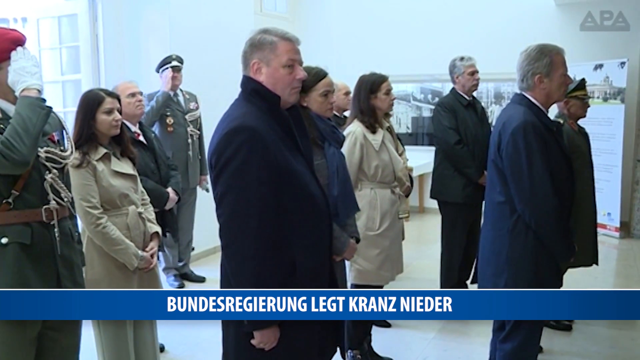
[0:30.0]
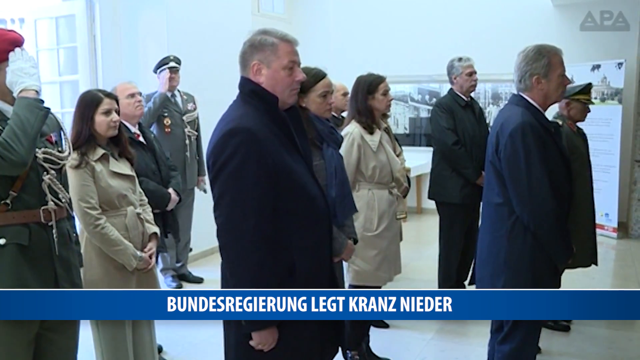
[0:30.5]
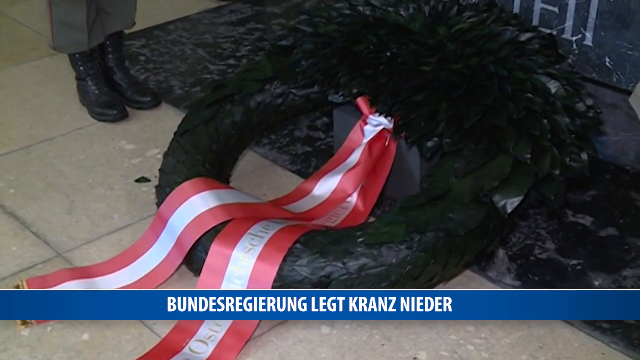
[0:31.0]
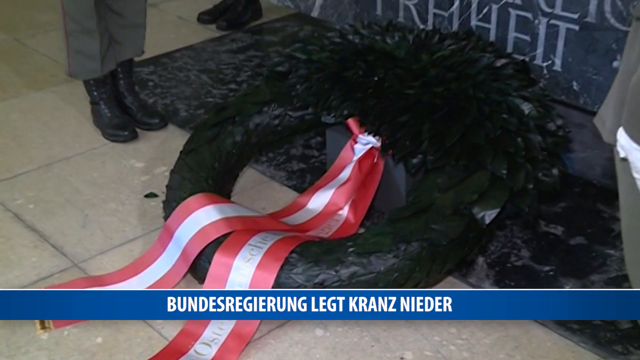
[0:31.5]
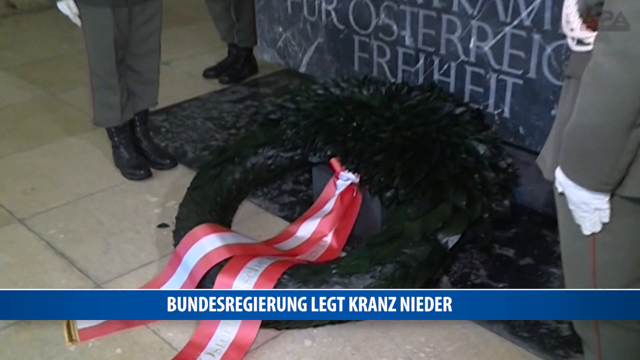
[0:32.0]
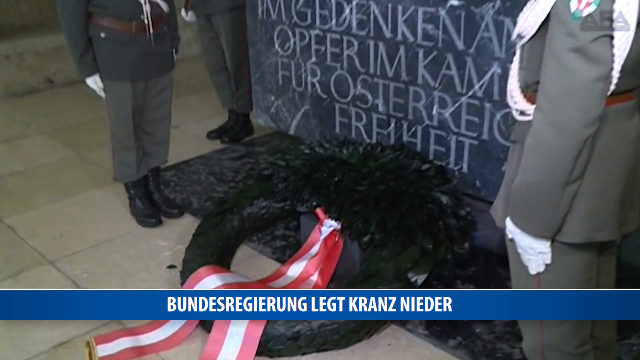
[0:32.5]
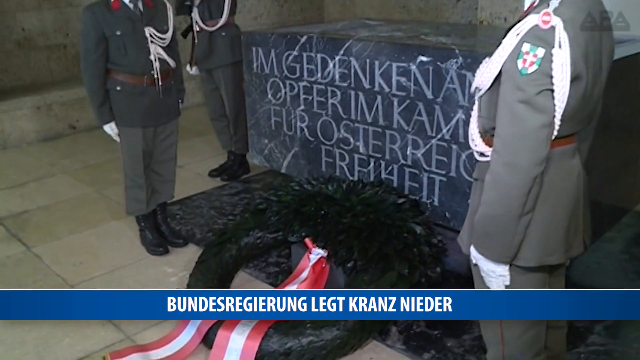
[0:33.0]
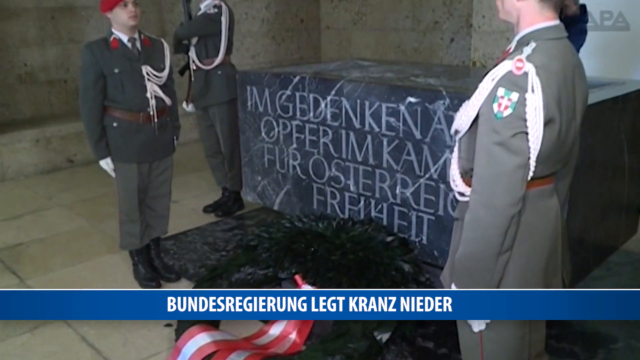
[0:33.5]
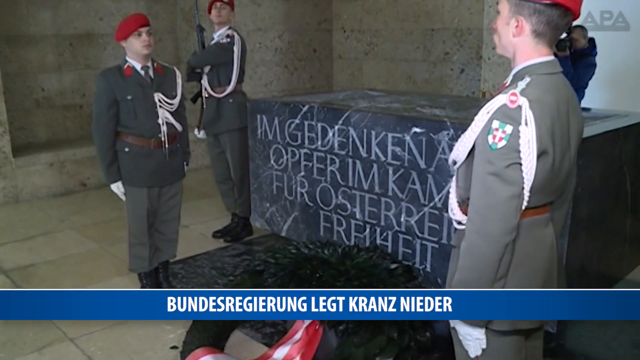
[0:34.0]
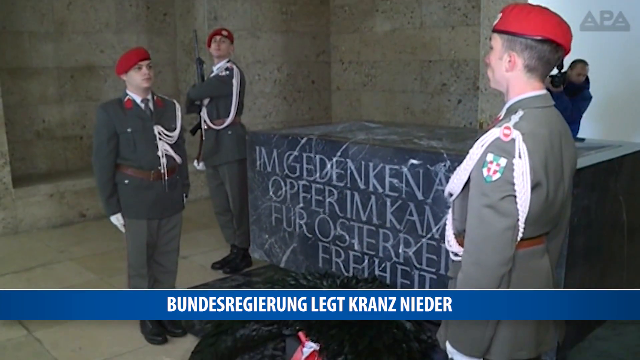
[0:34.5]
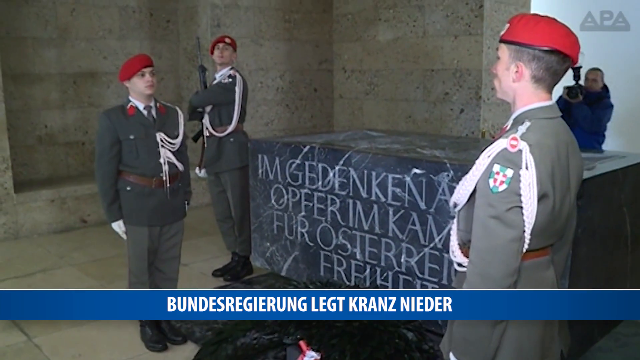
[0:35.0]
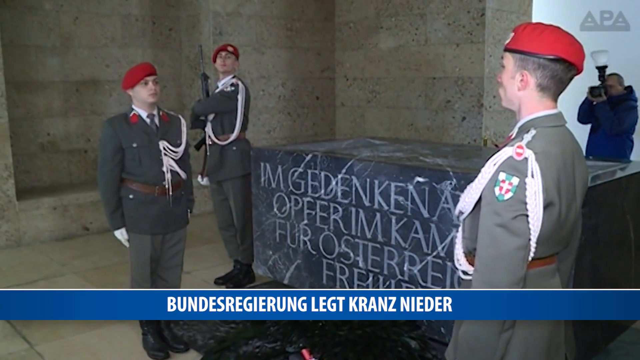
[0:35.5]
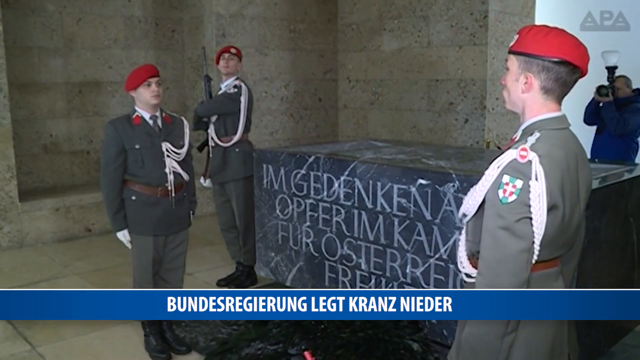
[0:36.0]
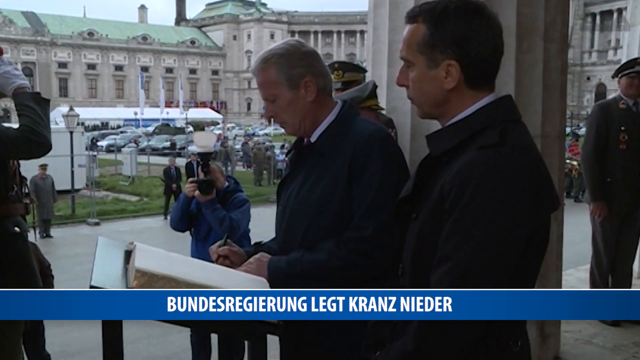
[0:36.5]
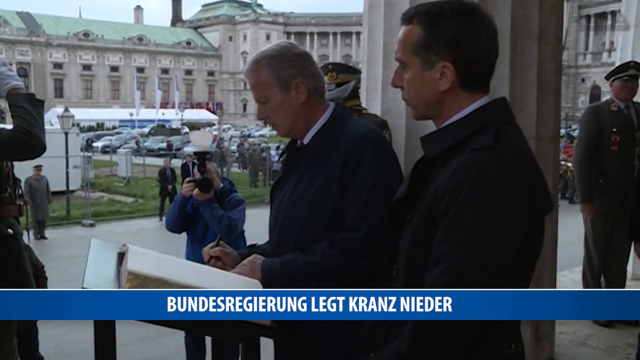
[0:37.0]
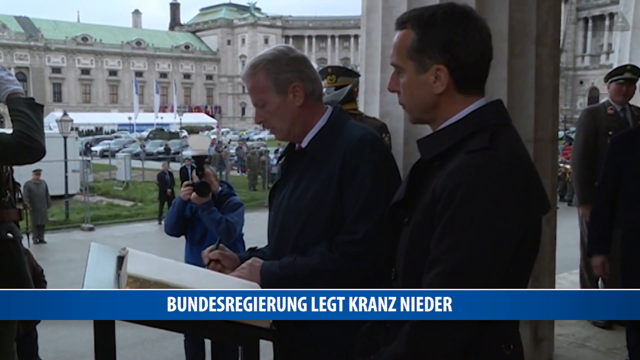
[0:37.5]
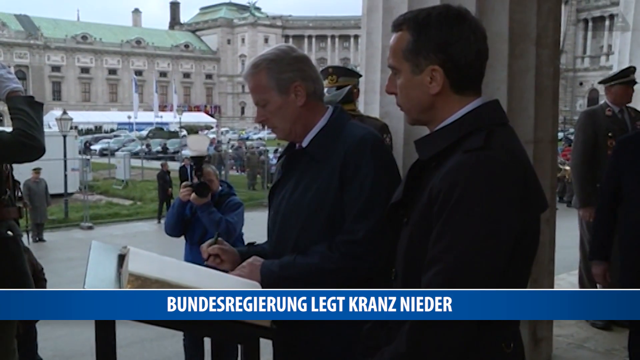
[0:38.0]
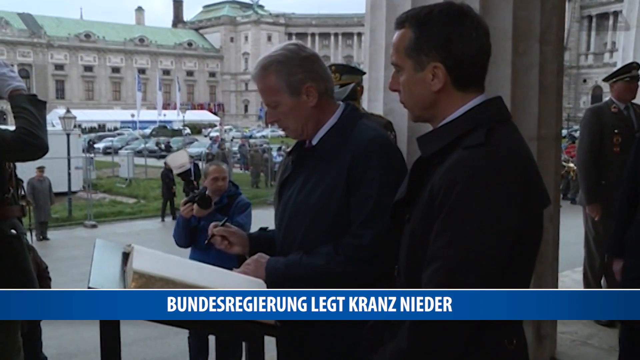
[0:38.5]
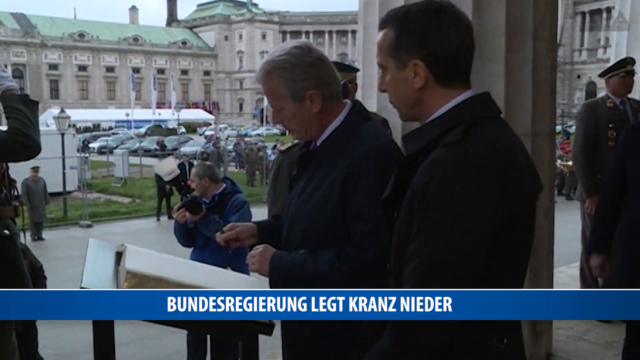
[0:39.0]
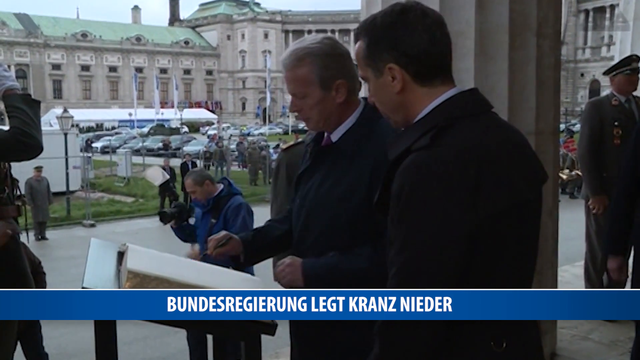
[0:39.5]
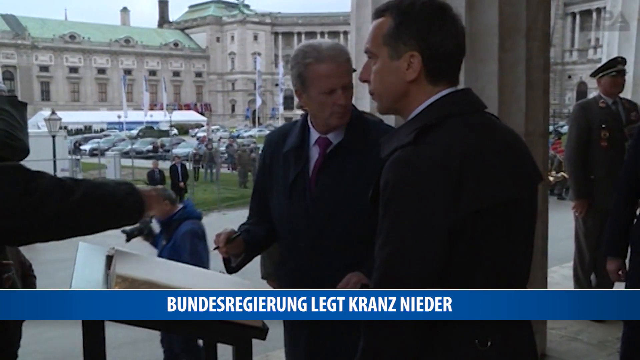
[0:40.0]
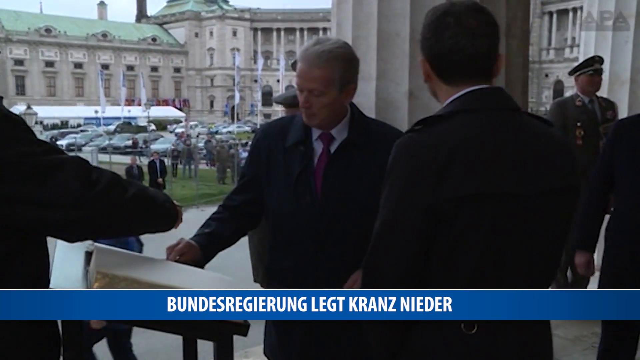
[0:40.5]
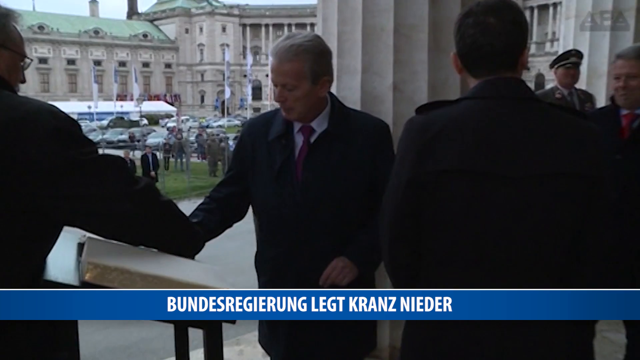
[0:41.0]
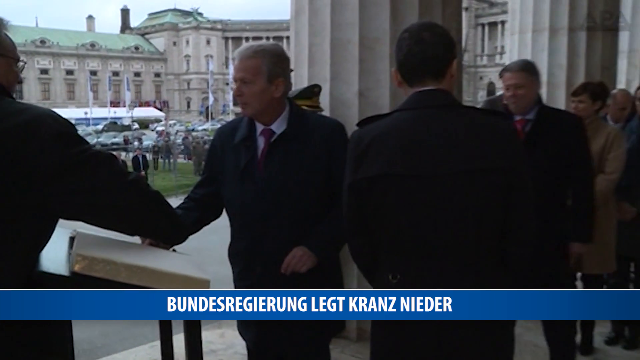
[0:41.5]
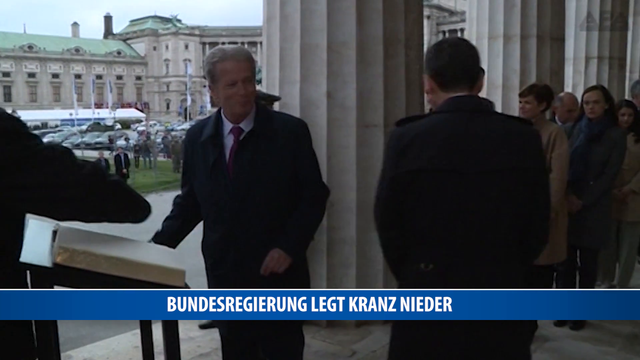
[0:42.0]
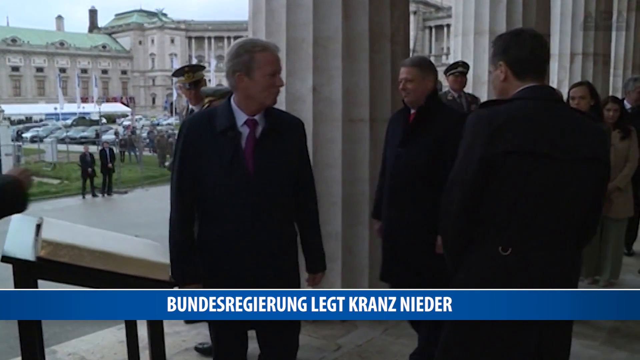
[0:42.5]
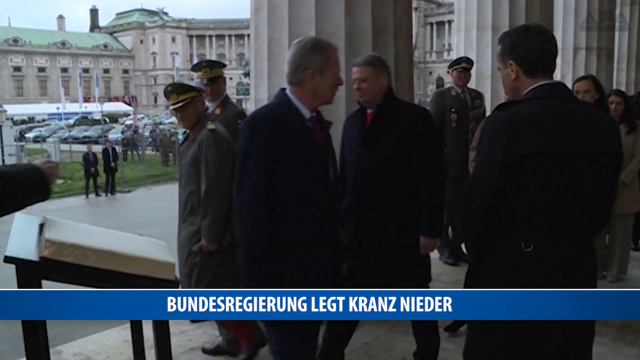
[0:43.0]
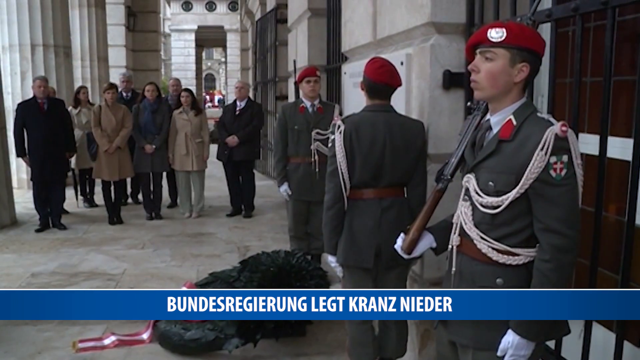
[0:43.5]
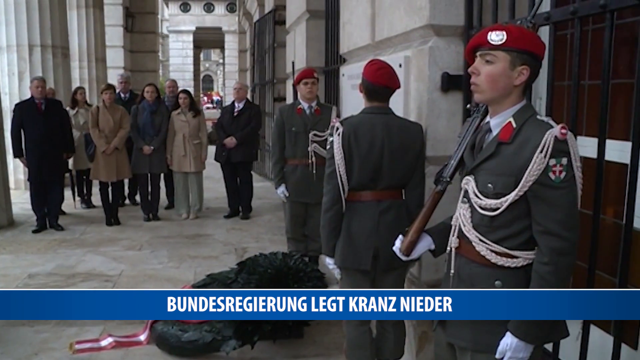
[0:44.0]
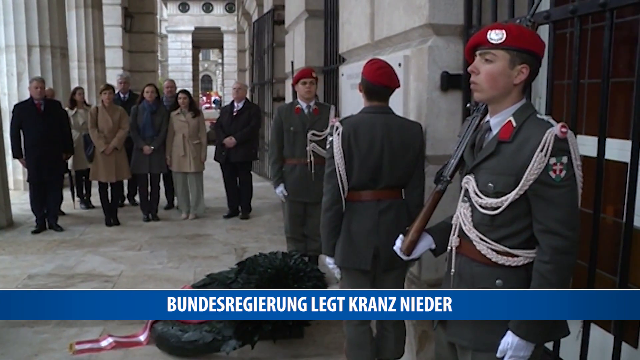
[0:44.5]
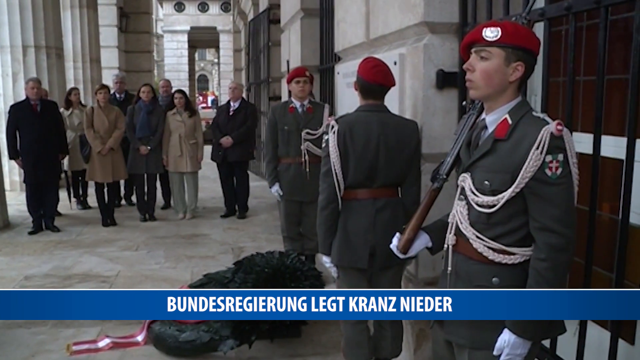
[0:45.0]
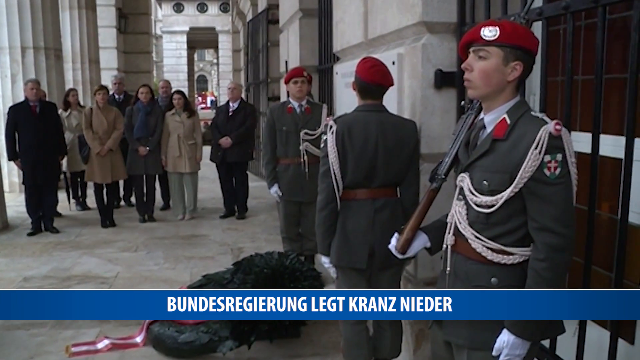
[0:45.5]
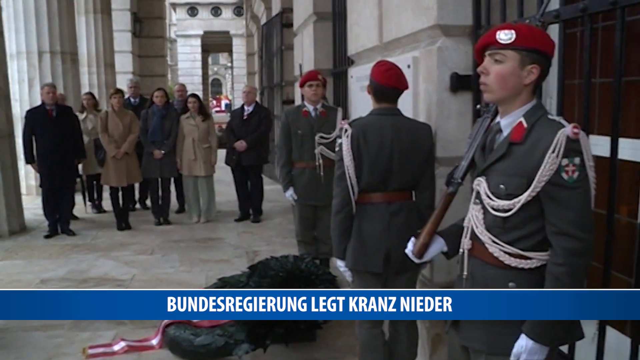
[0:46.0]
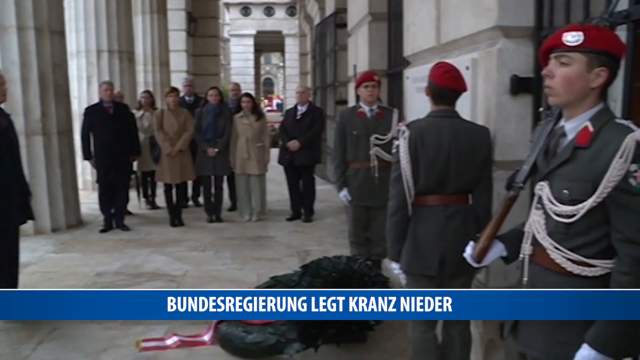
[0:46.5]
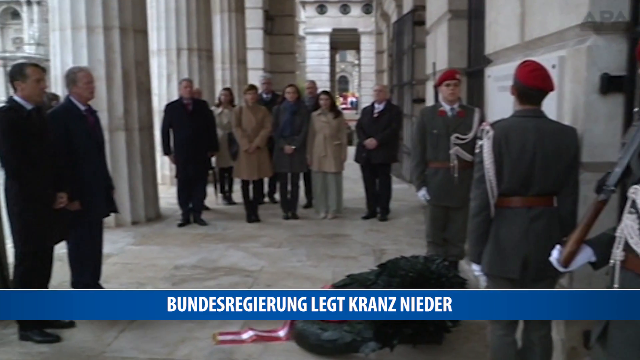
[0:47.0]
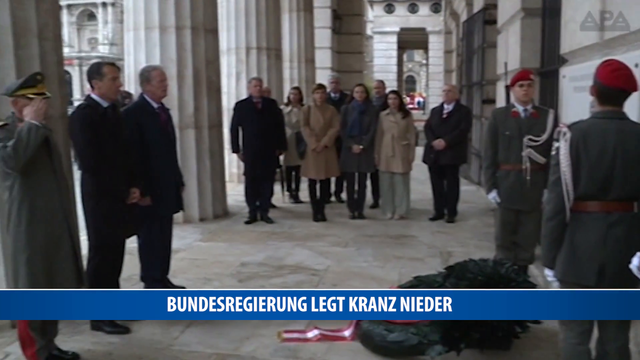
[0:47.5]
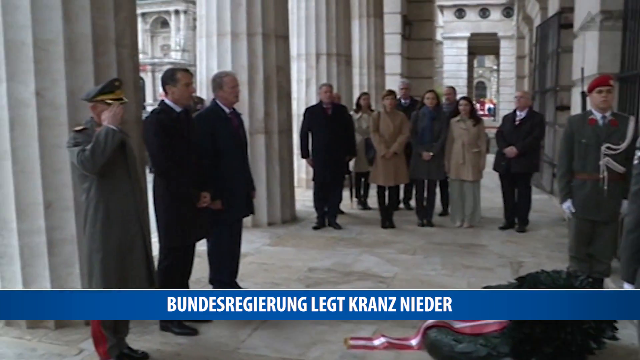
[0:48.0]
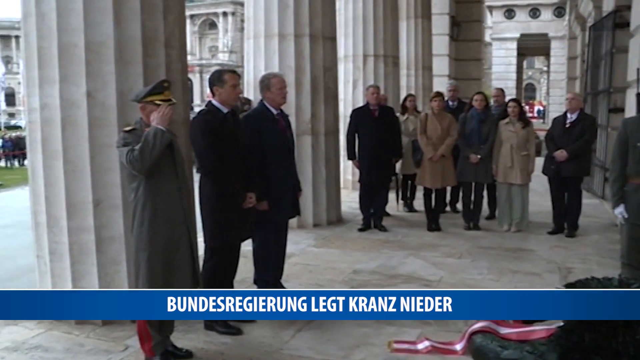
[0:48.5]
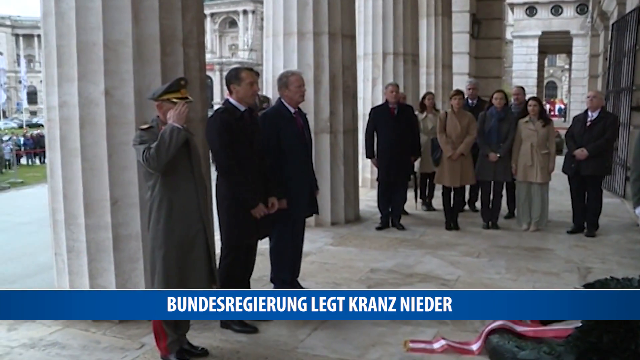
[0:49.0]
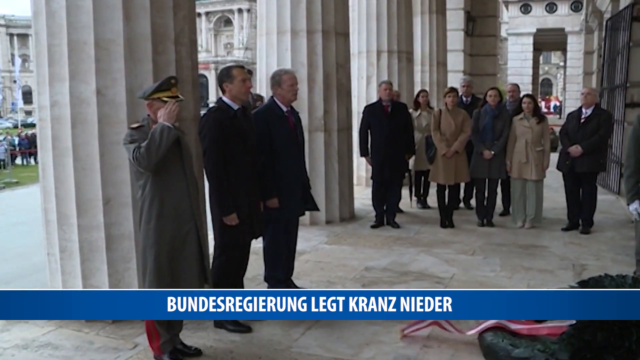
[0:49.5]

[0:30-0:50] People walk, some in a group and some individually. Soldiers are present, saluting the leaders at the ceremony, which seems to be a solemn, memorial or significant ceremony. A man signs papers: the paper is handed to him, and a soldier standing by gives the paper back for him to sign. The soldiers keep saluting, and the people continue walking after the ceremony is done.